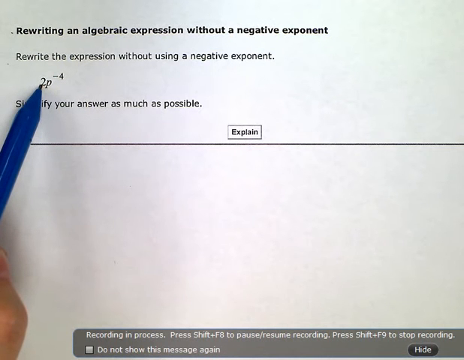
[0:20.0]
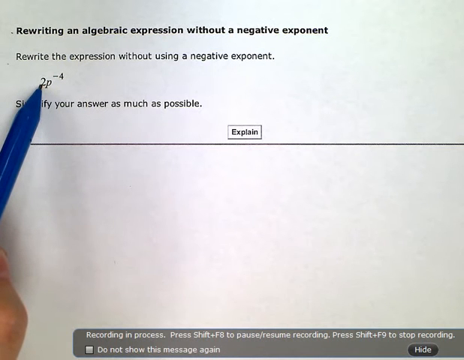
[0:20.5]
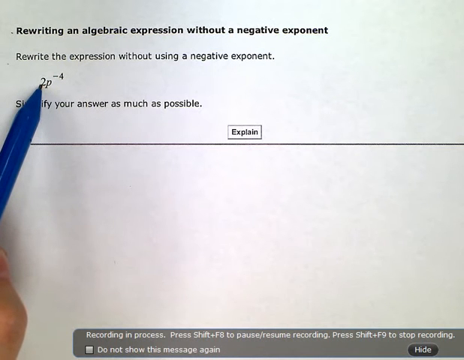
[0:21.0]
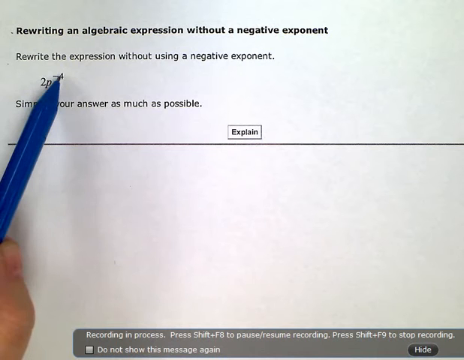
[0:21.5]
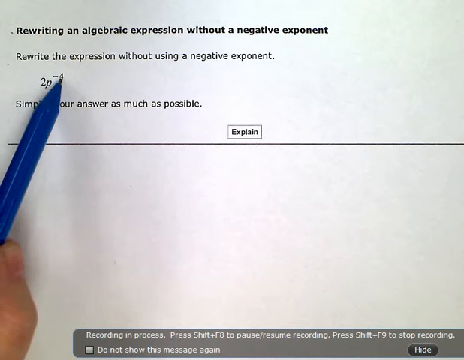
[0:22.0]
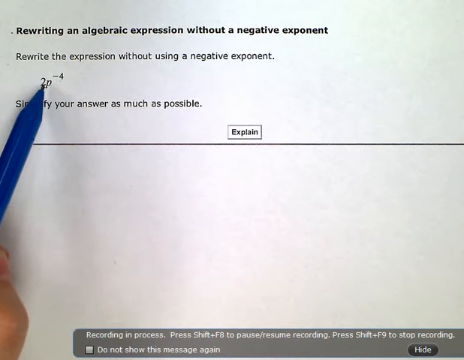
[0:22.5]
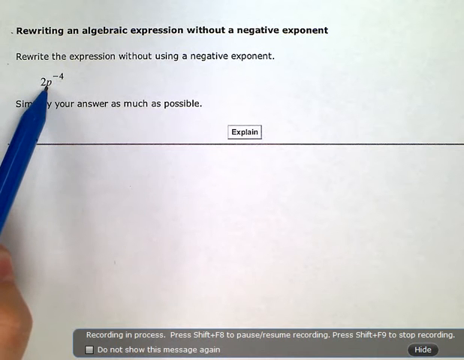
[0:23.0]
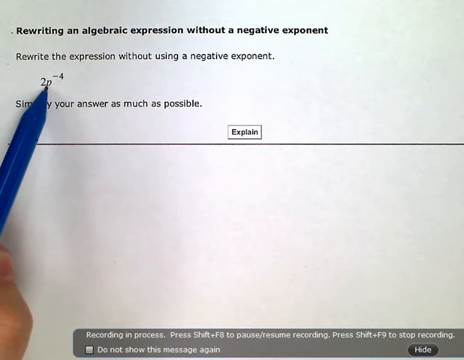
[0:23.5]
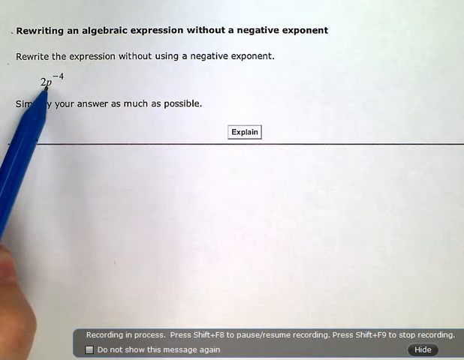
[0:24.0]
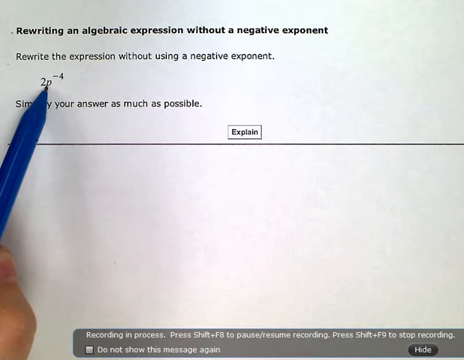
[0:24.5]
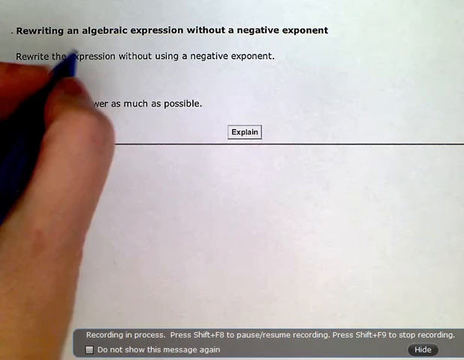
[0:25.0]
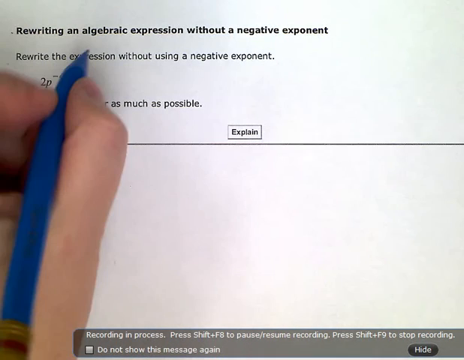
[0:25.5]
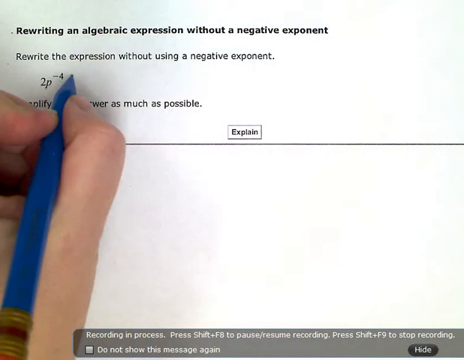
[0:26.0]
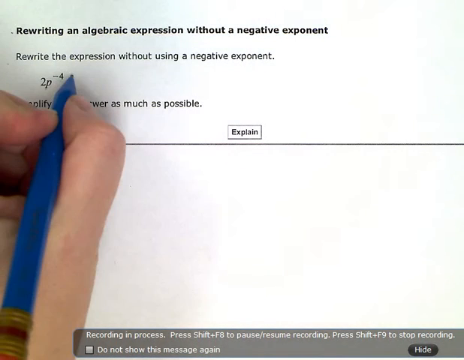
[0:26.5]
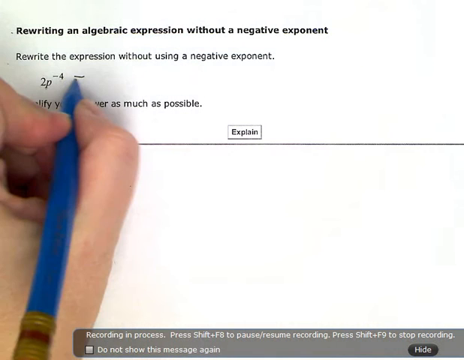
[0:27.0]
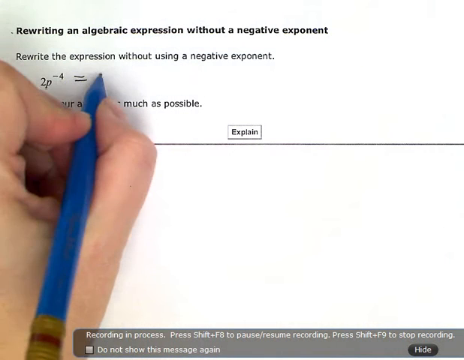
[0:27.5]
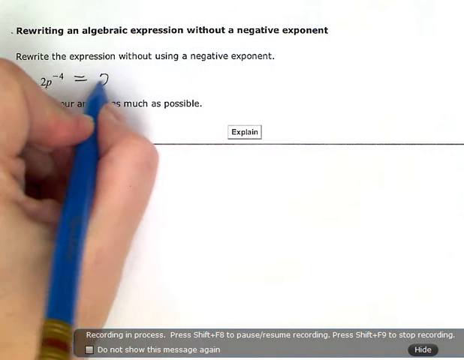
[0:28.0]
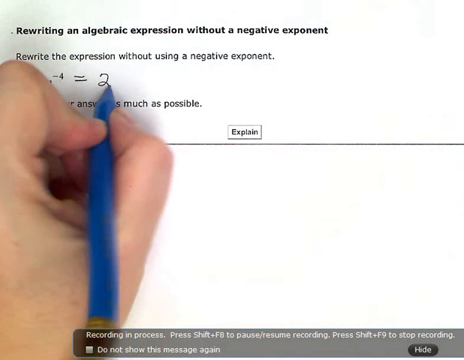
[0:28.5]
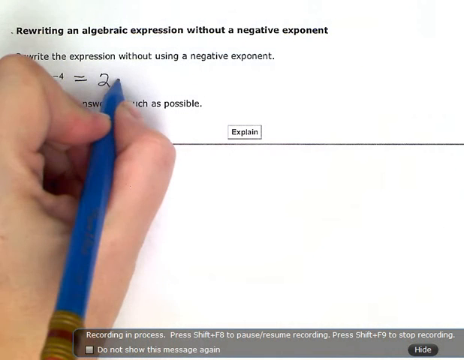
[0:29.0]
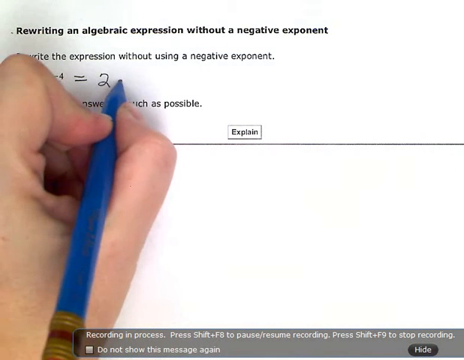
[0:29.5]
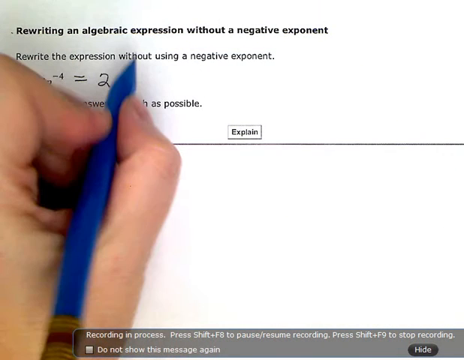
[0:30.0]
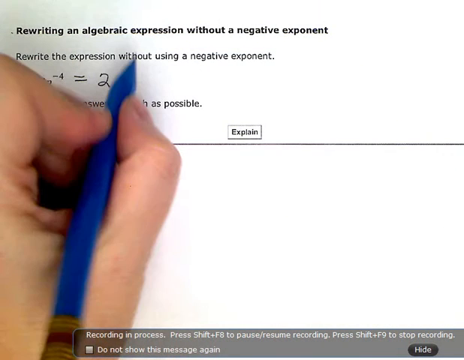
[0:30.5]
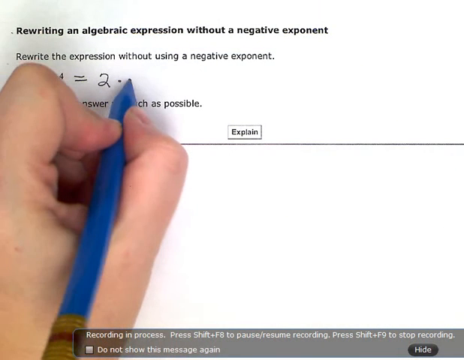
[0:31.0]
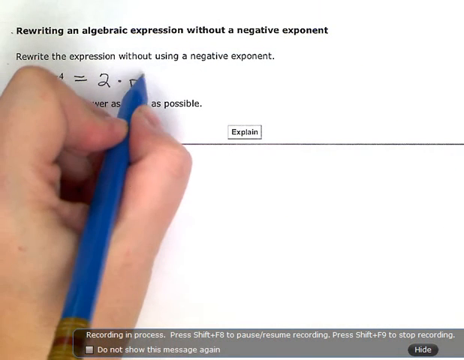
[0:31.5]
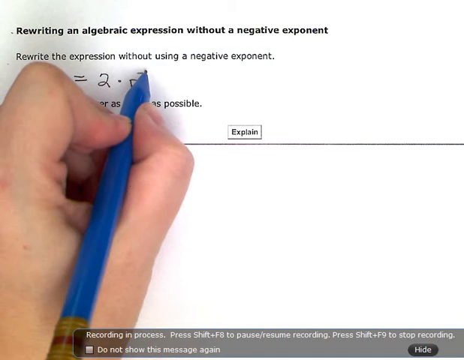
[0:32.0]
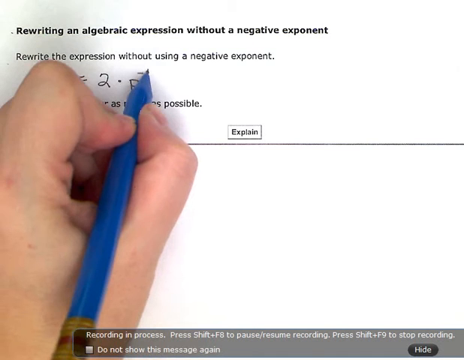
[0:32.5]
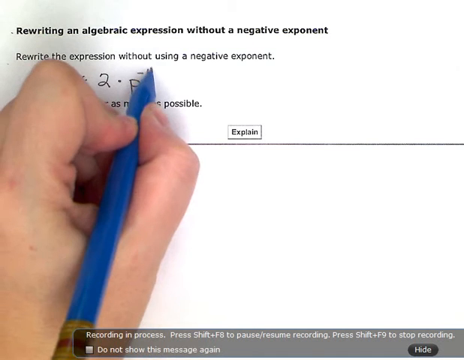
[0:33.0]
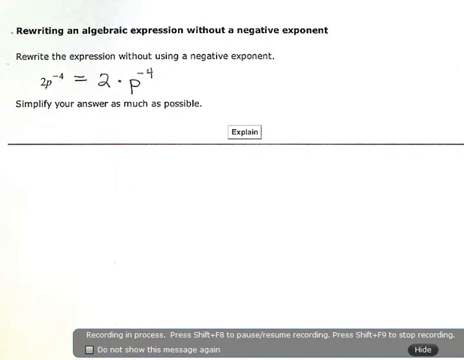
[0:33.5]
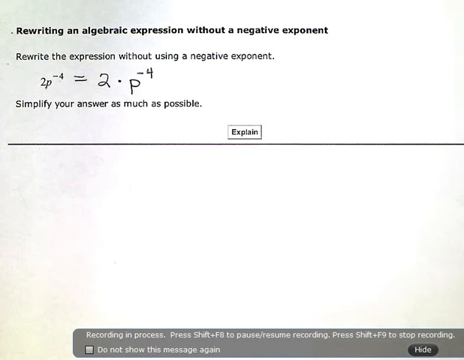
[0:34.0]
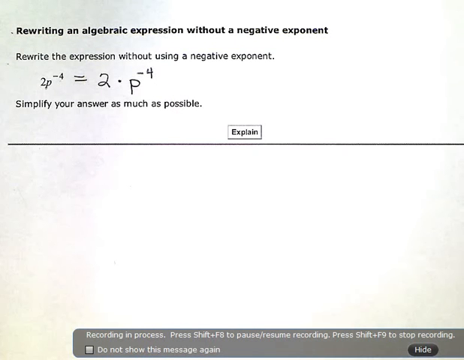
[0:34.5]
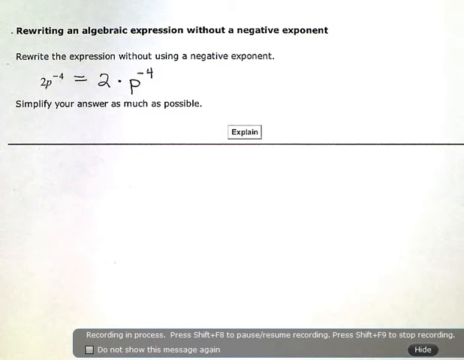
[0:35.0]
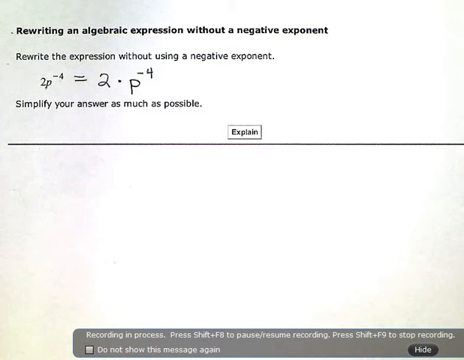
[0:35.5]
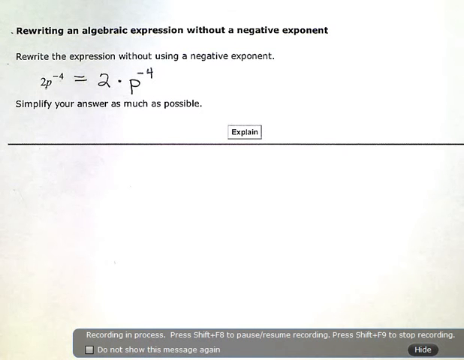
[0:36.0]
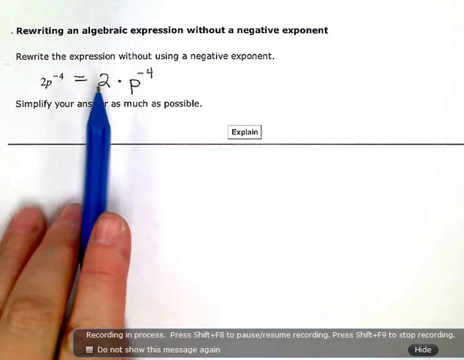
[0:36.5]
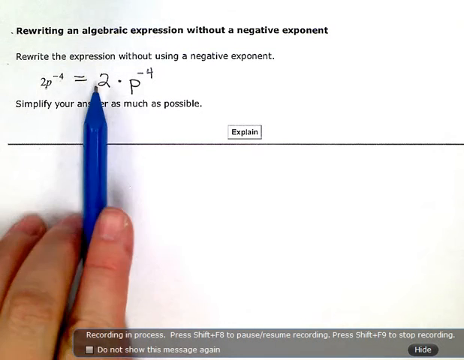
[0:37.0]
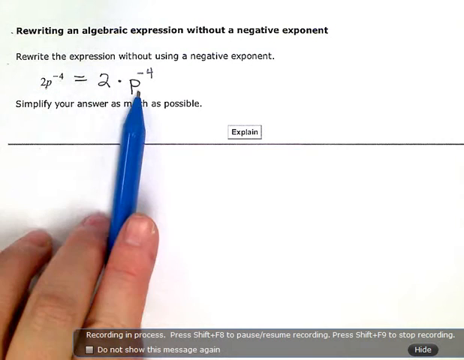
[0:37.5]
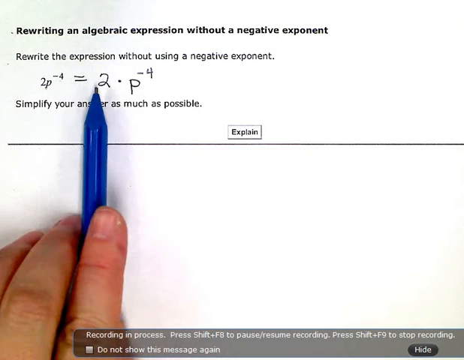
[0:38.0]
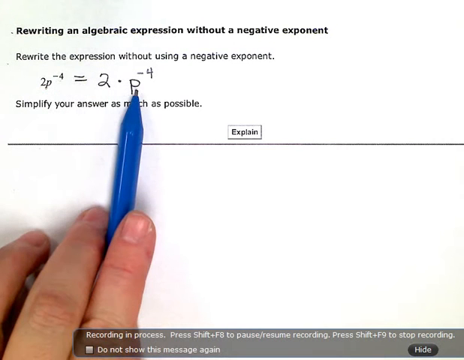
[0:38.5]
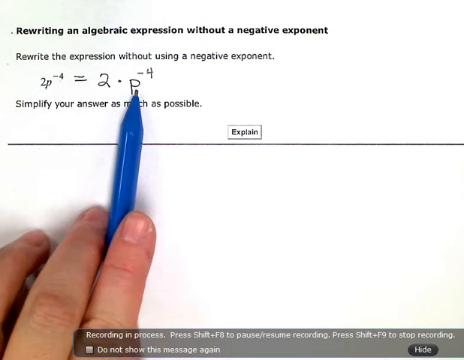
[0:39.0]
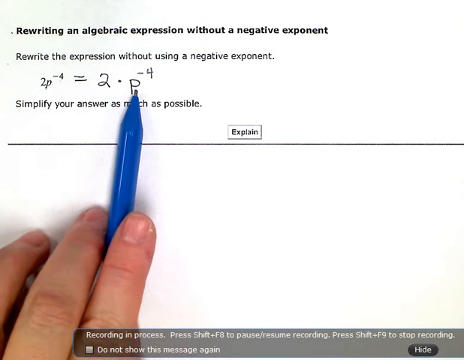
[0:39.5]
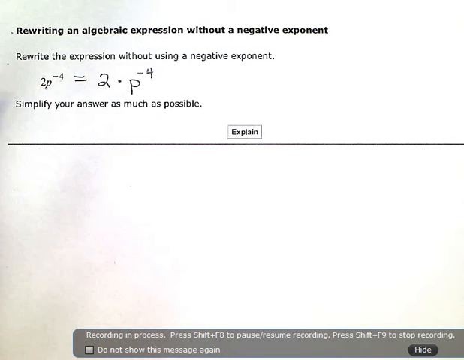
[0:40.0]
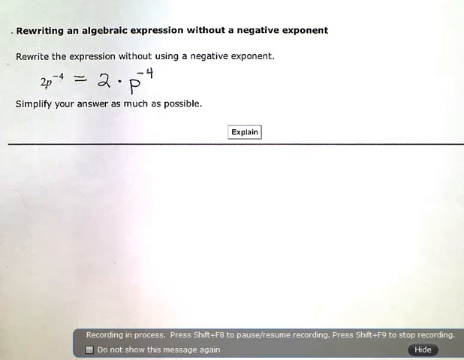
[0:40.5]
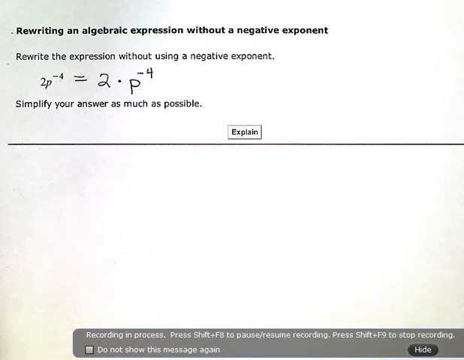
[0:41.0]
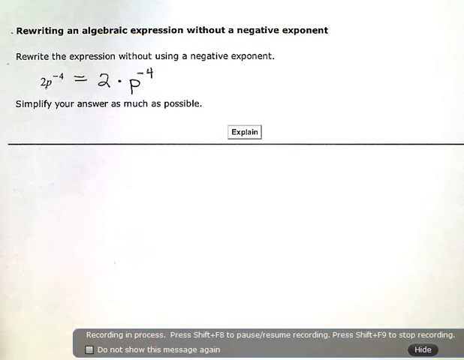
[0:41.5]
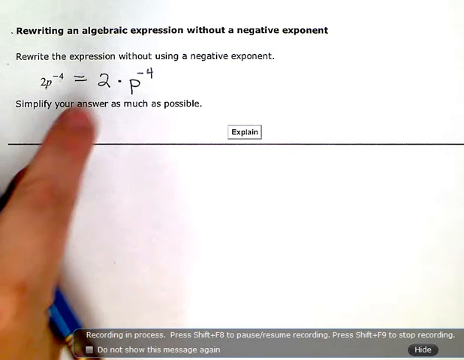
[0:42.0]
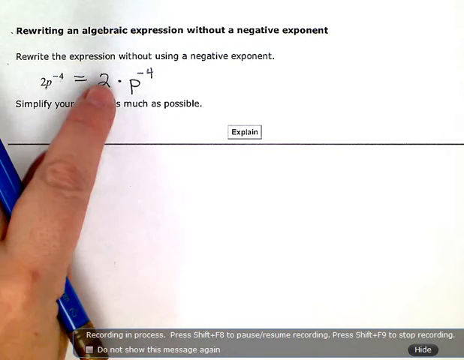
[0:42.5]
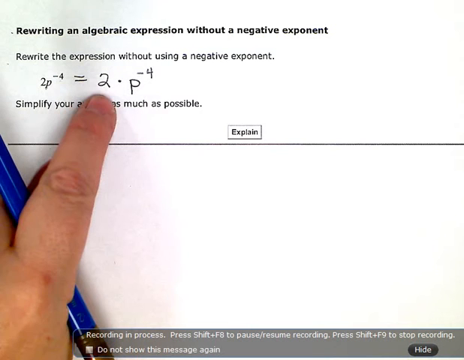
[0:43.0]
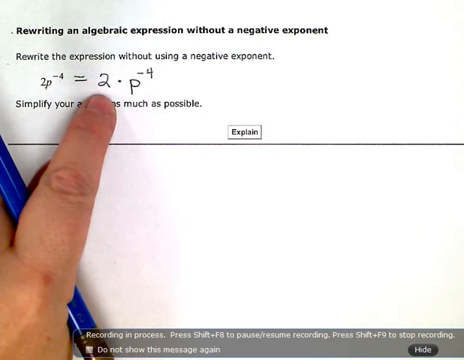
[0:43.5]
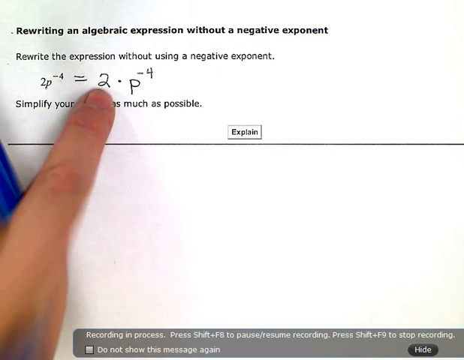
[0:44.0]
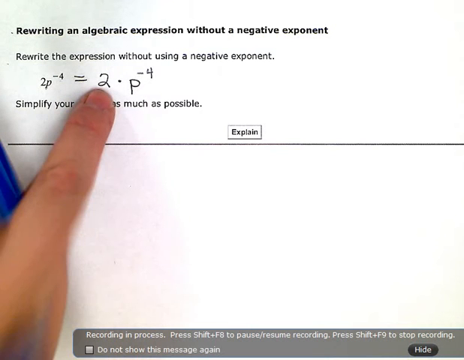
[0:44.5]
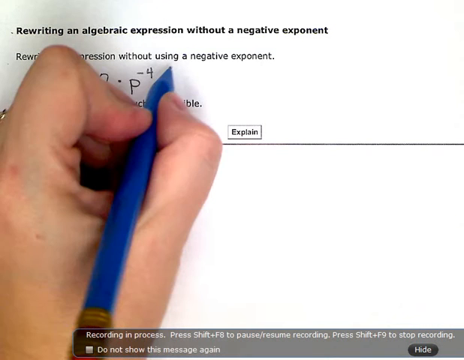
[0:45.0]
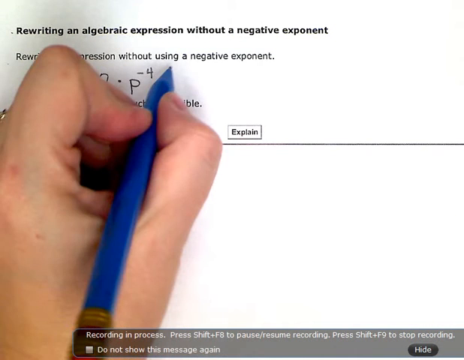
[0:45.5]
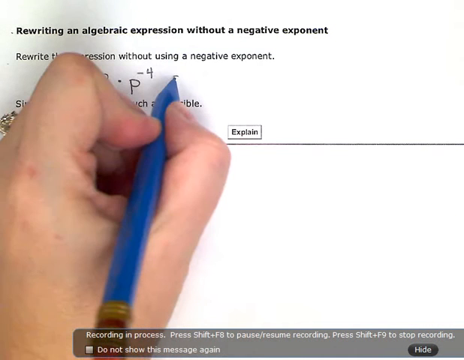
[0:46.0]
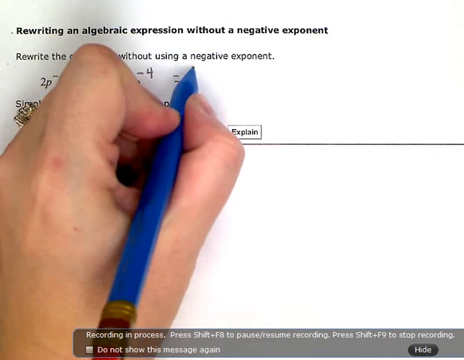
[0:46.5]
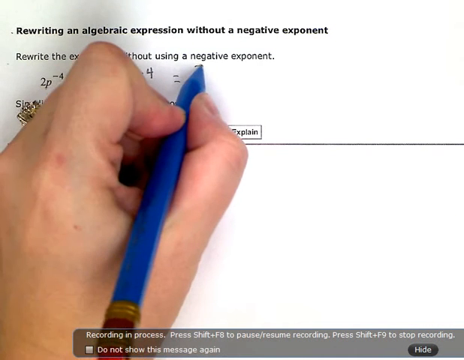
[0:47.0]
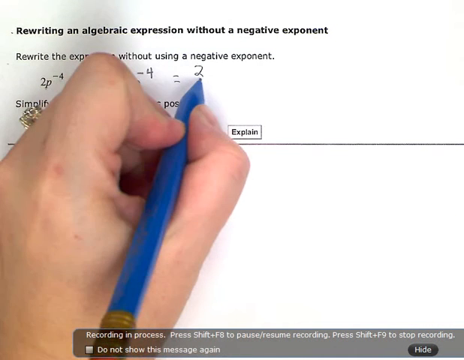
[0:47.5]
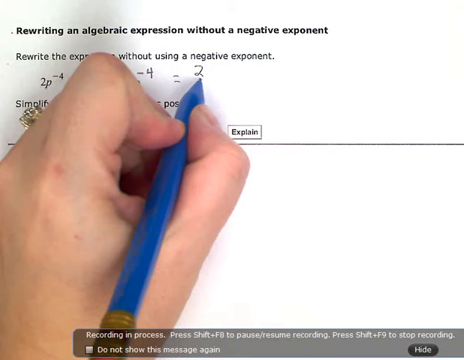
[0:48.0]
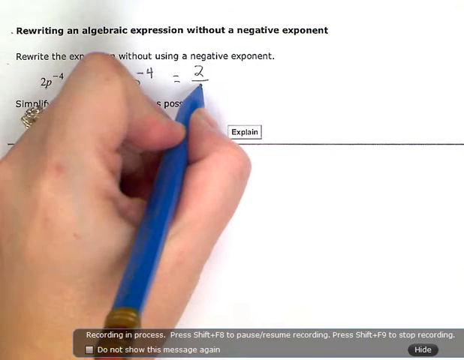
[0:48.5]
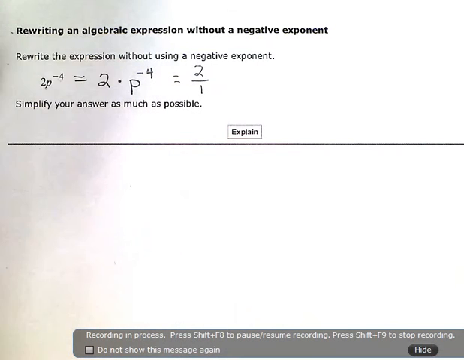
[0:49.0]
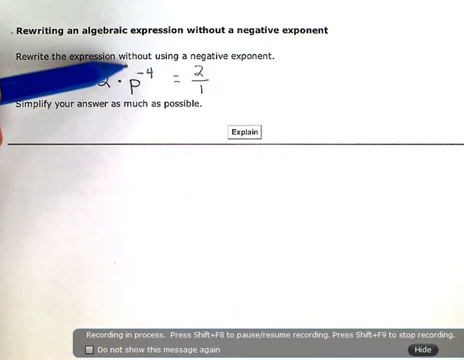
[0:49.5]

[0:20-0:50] Black borders frame the sides of the screen, with a white page visible in the middle. A hand holding a blue marker comes in from the left side and points at the algebraic problem, 2P to the negative fourth power, first pointing at the 2.